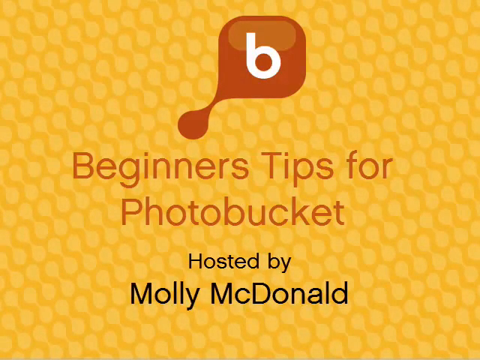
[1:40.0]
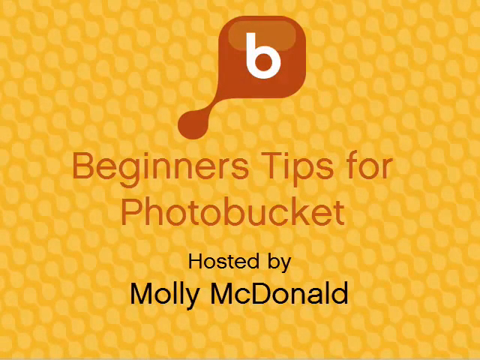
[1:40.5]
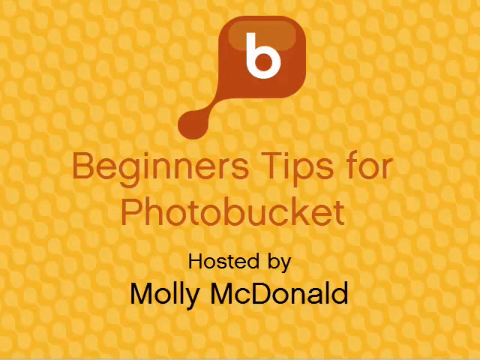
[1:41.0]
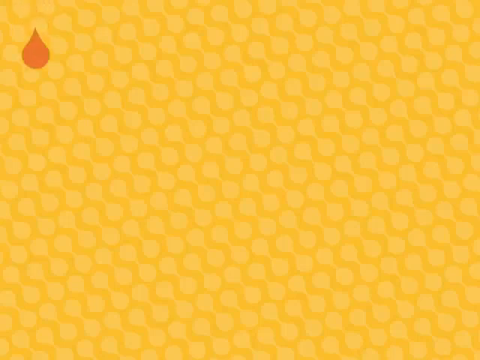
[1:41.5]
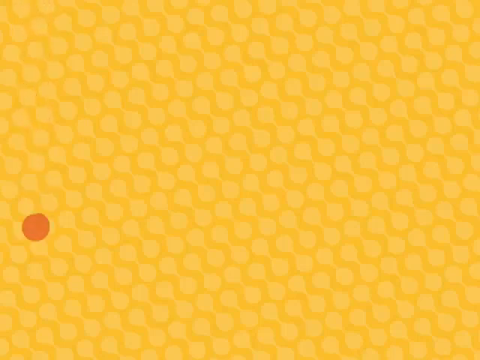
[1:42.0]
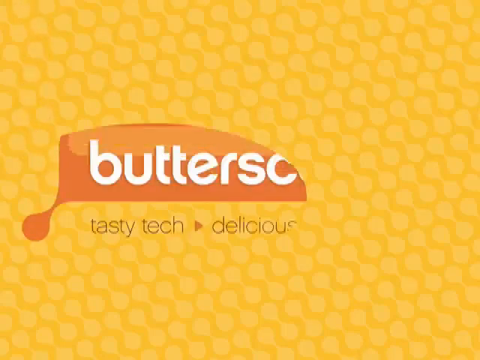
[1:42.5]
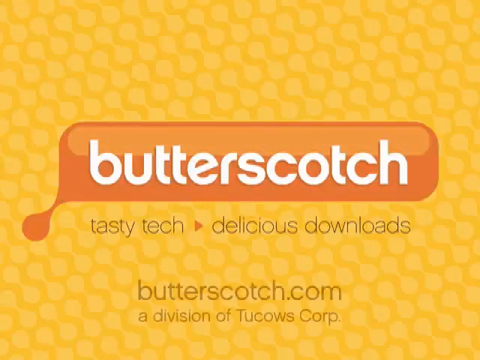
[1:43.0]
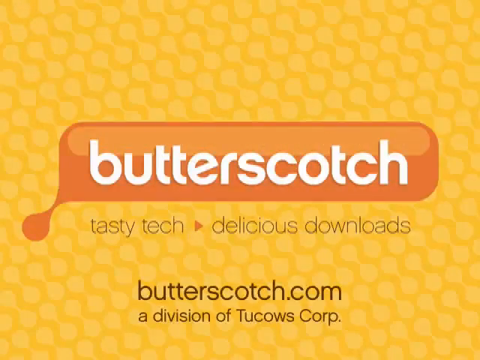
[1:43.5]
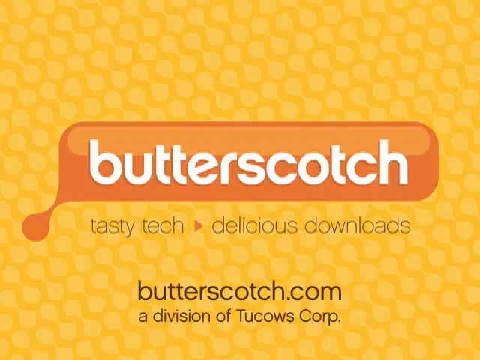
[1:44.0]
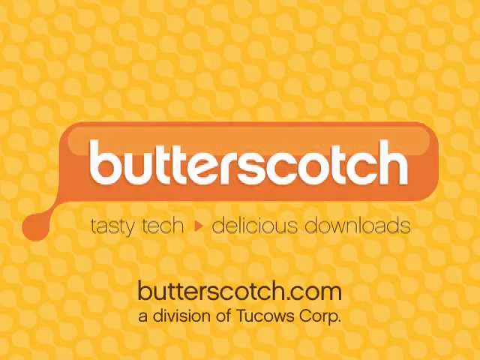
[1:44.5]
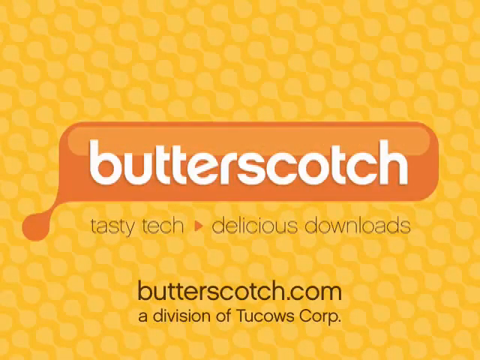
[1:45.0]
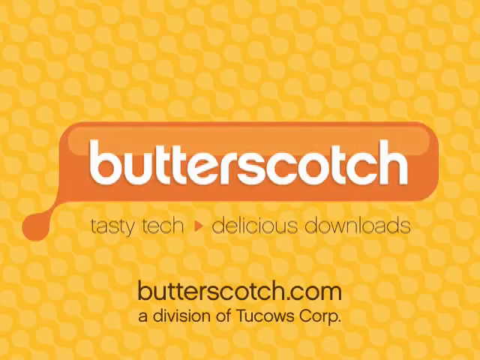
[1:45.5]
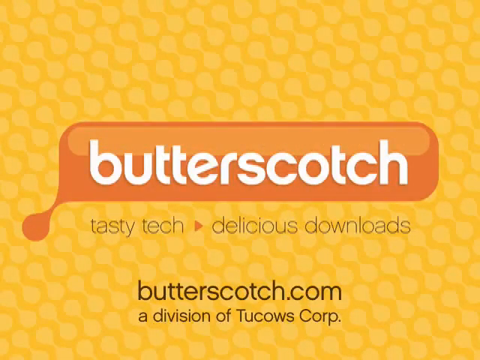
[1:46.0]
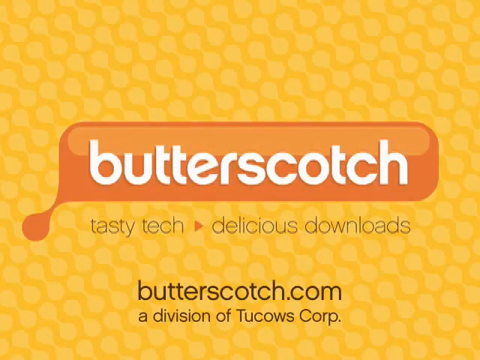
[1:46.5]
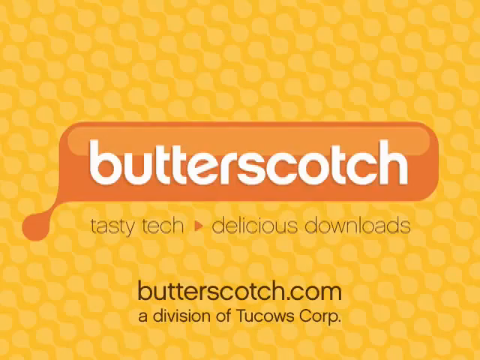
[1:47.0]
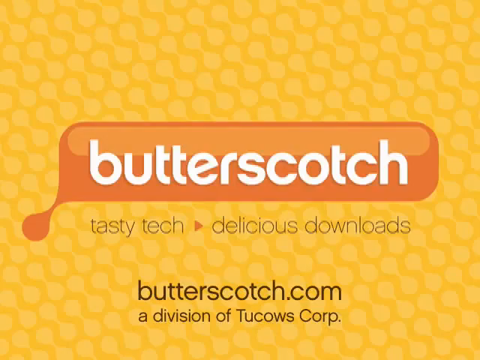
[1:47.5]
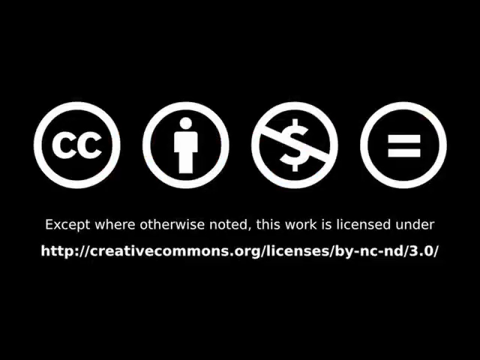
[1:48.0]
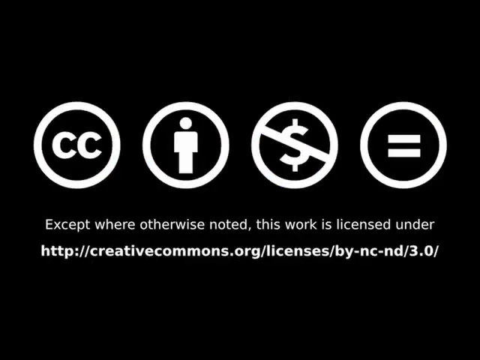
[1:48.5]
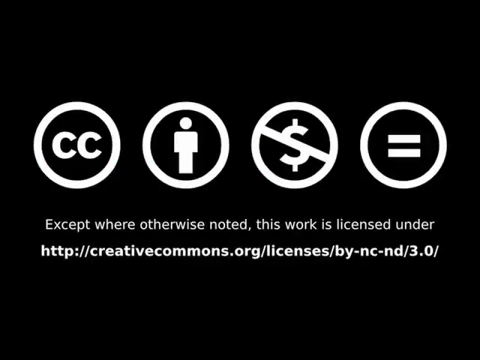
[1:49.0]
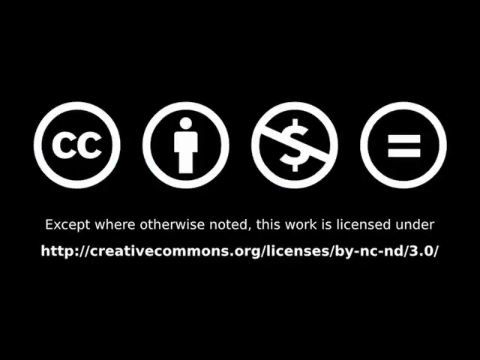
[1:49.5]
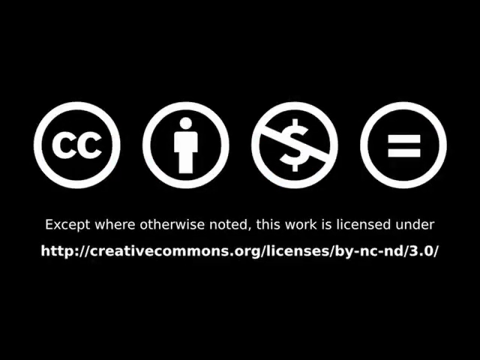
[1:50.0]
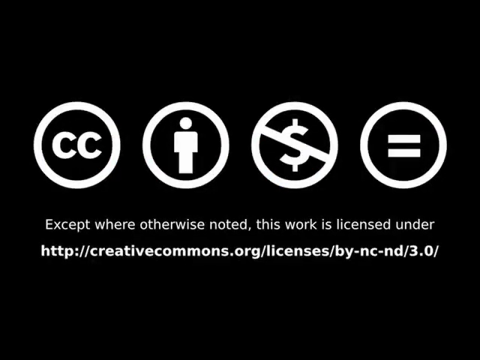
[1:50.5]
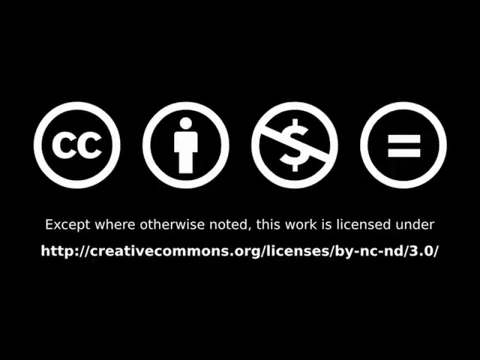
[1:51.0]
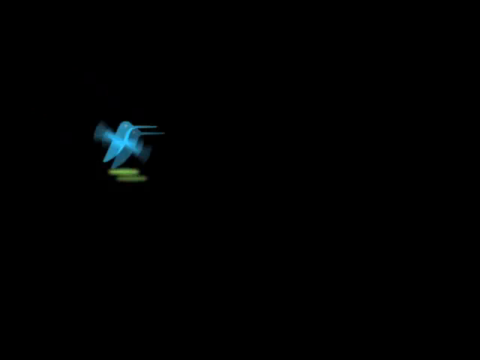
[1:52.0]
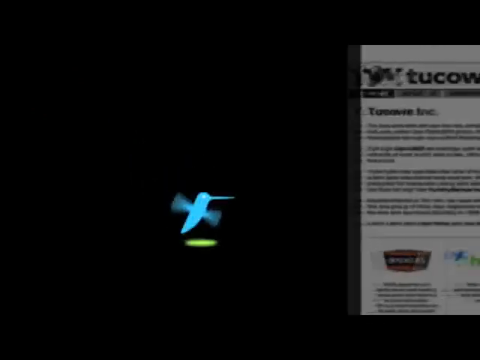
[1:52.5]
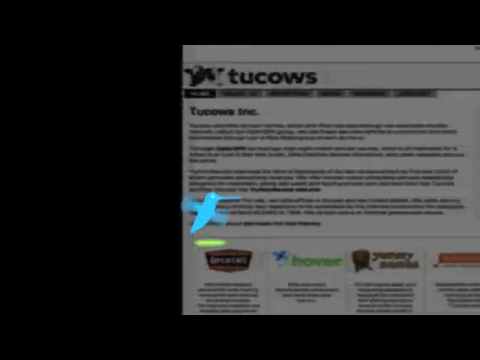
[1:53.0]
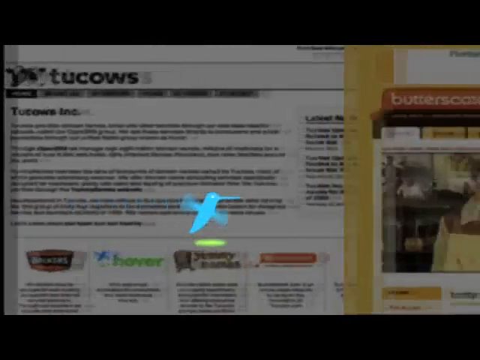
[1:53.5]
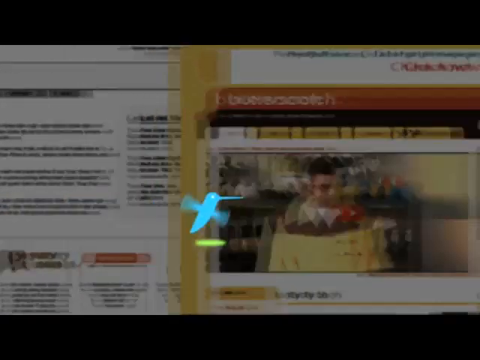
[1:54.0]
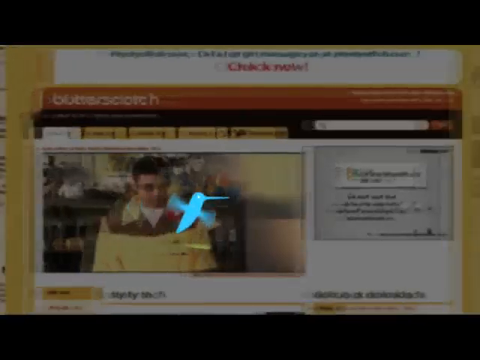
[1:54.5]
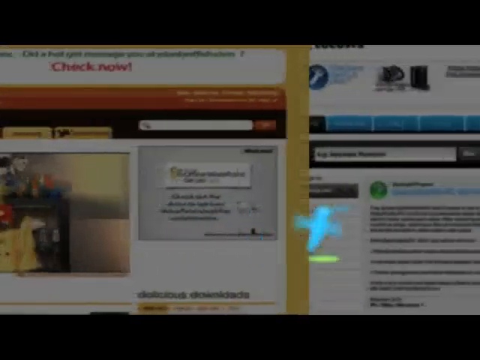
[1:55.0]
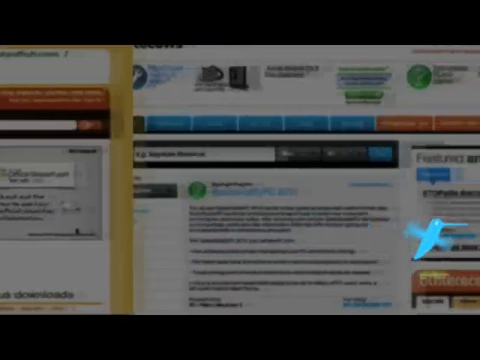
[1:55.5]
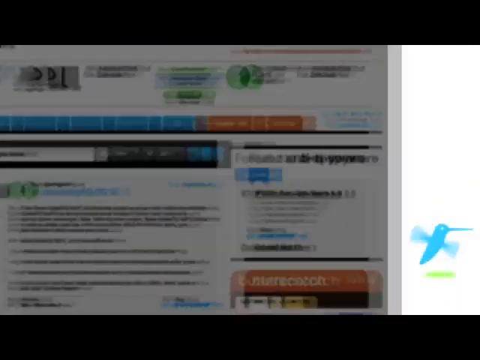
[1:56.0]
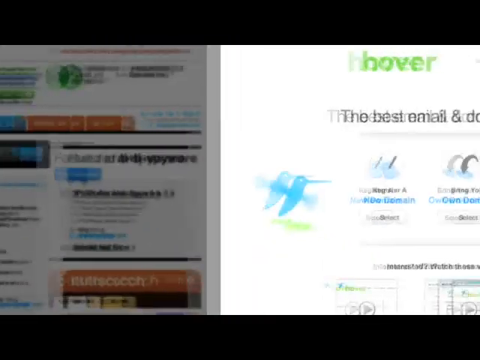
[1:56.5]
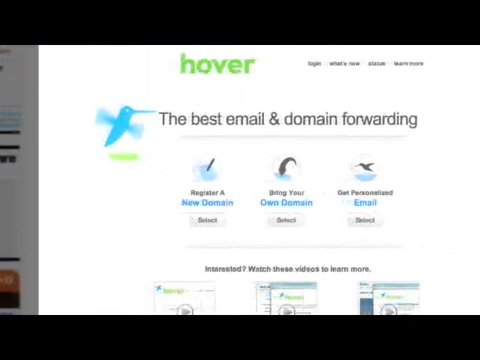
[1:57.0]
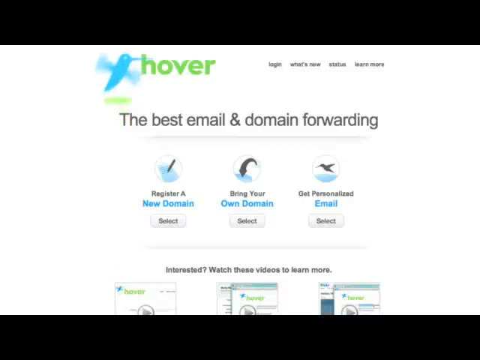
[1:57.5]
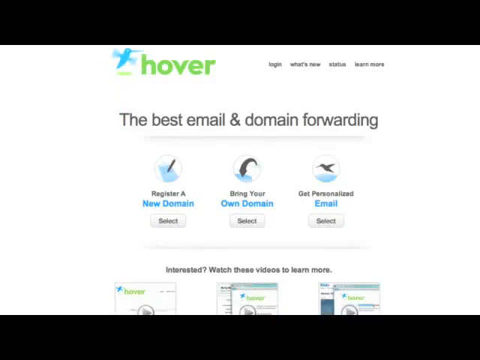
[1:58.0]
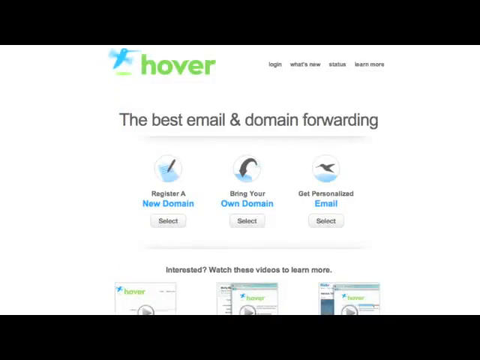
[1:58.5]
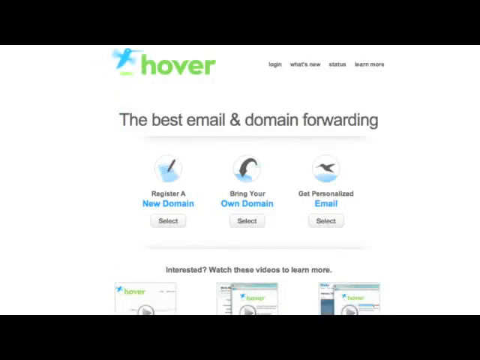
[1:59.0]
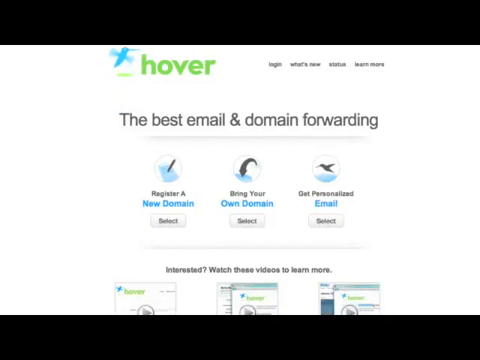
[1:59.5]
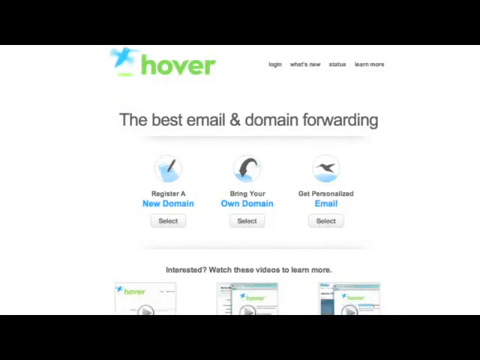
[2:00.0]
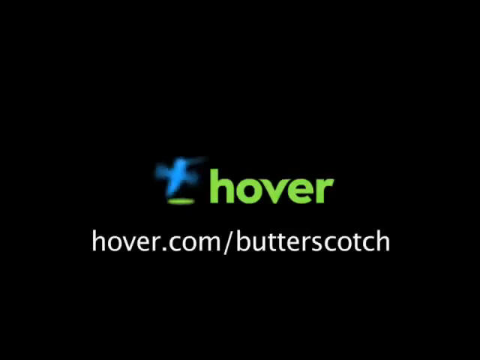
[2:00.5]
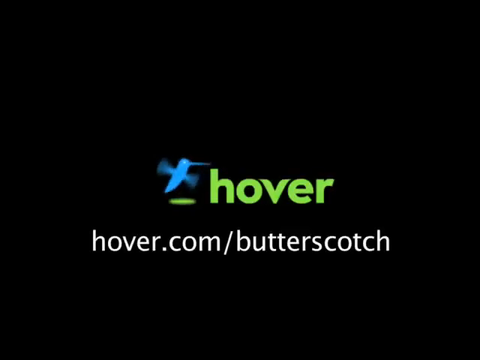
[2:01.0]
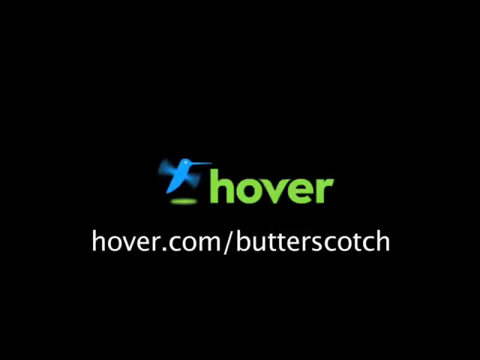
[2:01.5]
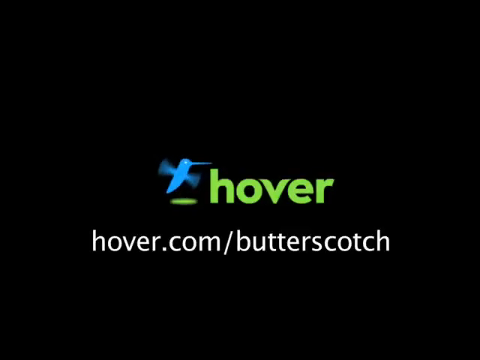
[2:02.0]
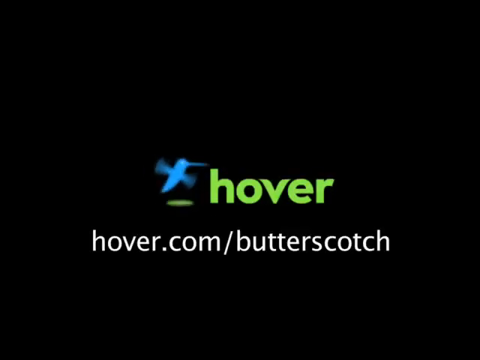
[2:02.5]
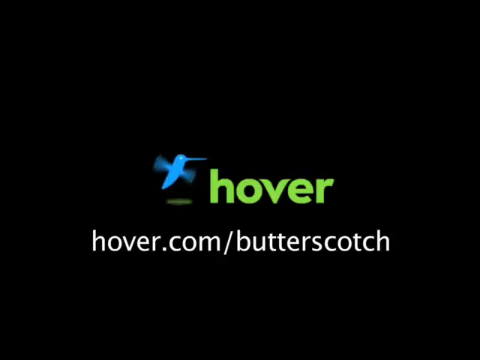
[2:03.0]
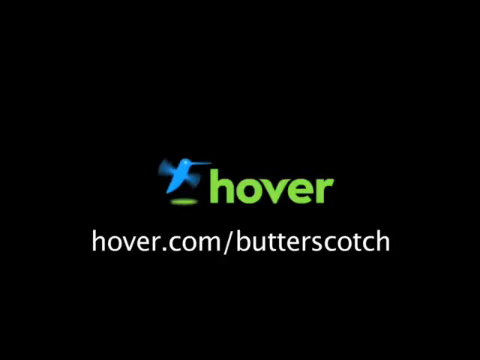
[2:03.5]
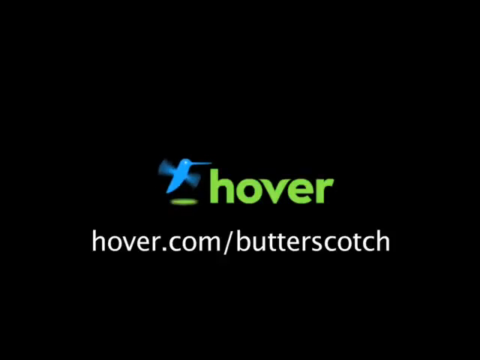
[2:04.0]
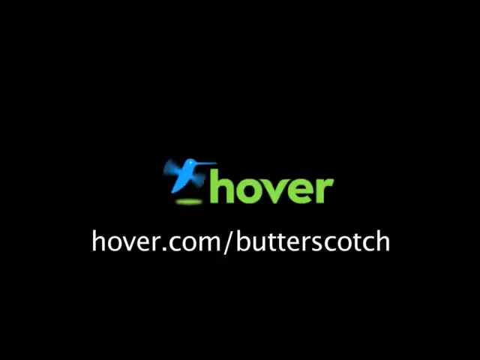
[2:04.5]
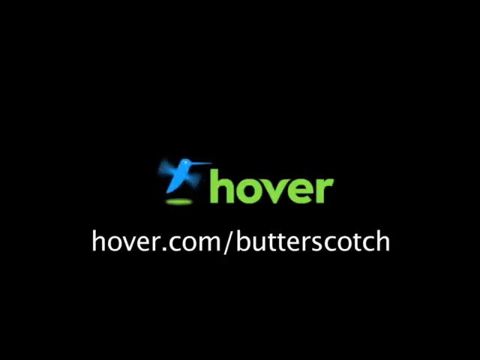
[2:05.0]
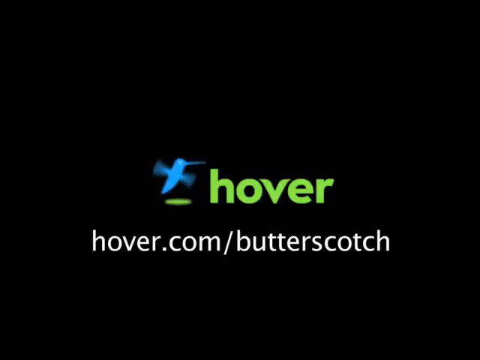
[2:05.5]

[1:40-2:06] A yellow honeycomb background shows a brown box with white text with a bee, and brown and black text reading "beginners tips for photo bucket hosted by molly mcdonald." It transitions to the yellow honeycomb background with a brown banner and white text reading "butterscotch," and brown text reading "tasty tech delicious downloads butterscotch.com a division of tucco's corp." Next comes a black background with four white icons showing a cc, a person, a money symbol prohibition sign, and an equal sign, with white text reading "except where otherwise noted this work is licensed under creativecommons.org/licenses/by nc nd/3.0." Then a slideshow shows a blue bird on the screen, with text reading "hover the best email and domain forwarding register a new domain bring your own domain and get personalized email interested watch these videos to learn more." Finally, a black background shows the green hover logo, white text reading "hover.com/butterscotch," and the little blue bird moving around.